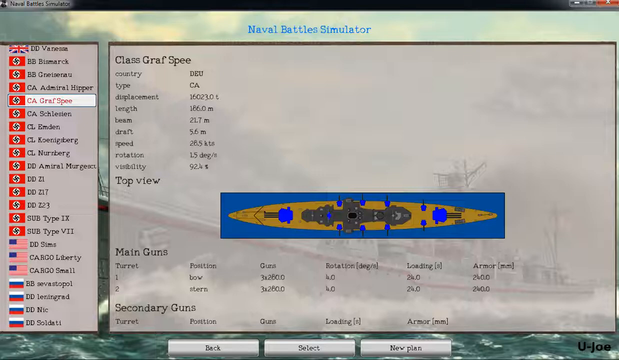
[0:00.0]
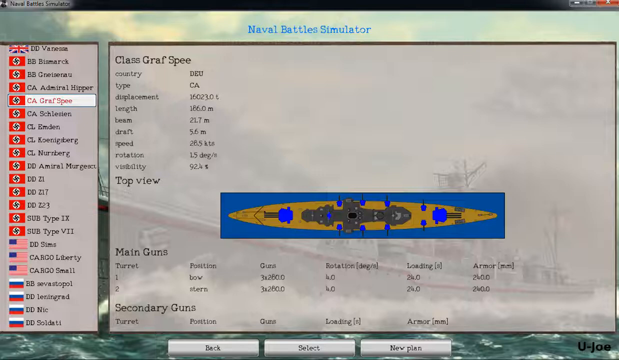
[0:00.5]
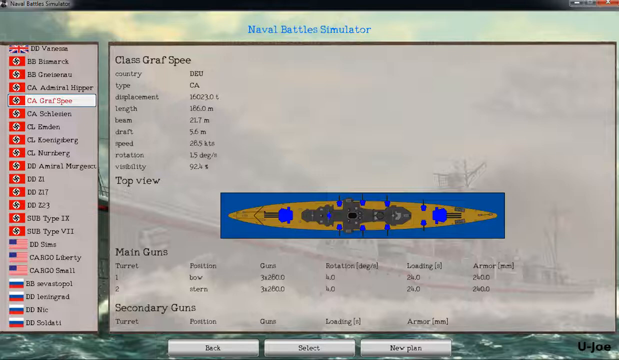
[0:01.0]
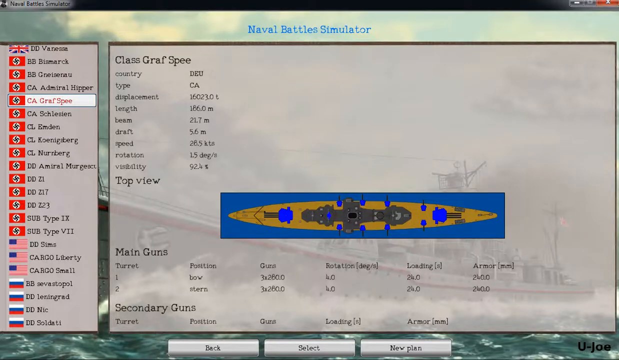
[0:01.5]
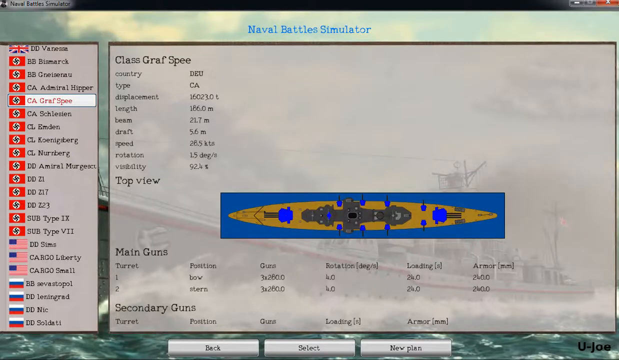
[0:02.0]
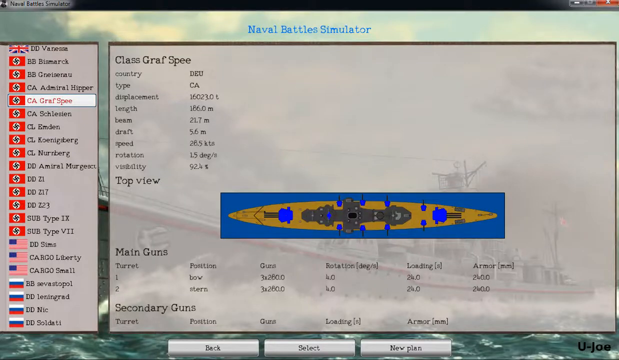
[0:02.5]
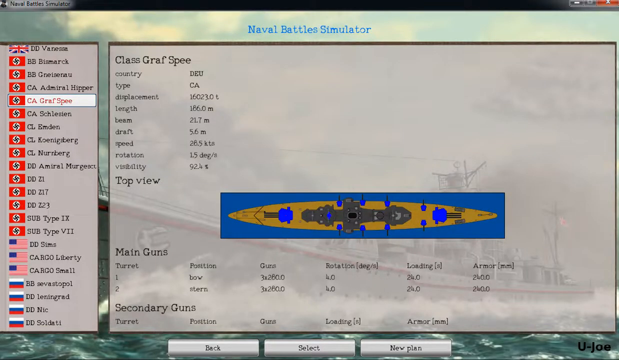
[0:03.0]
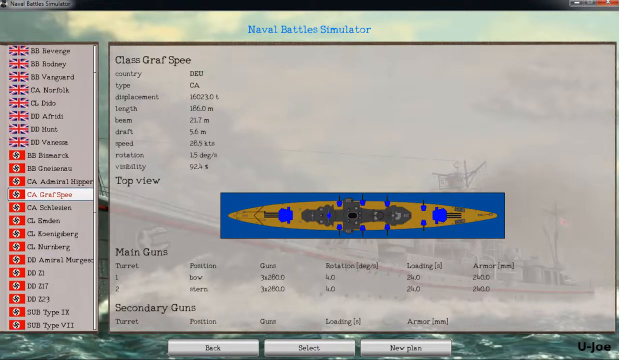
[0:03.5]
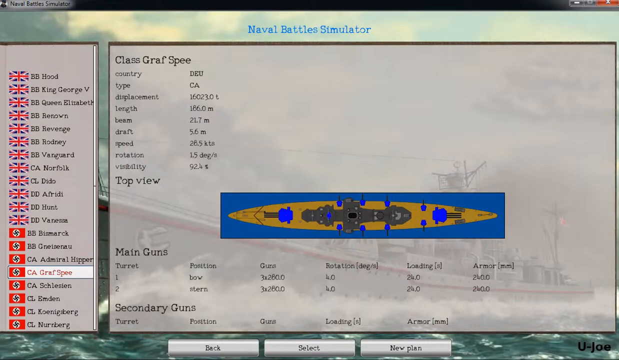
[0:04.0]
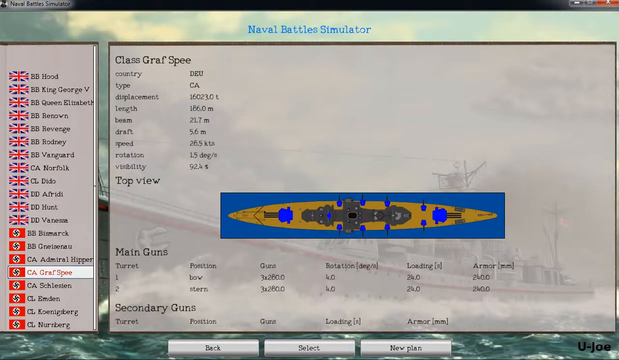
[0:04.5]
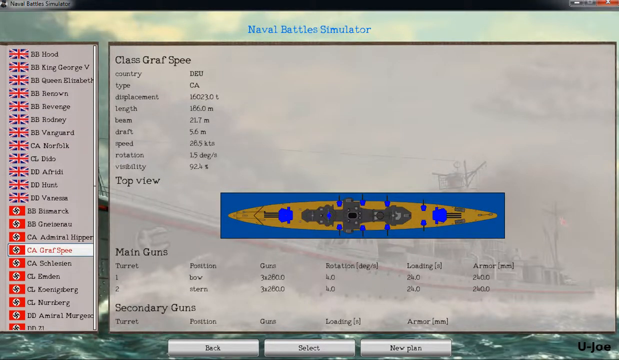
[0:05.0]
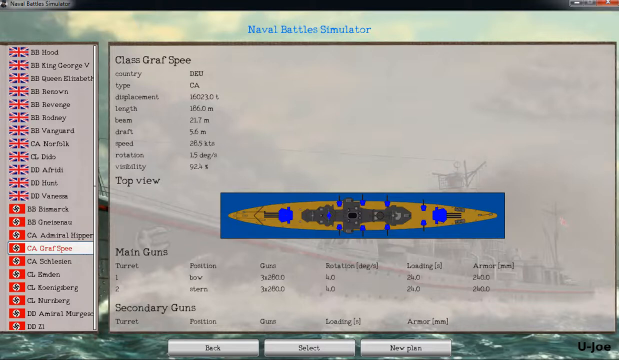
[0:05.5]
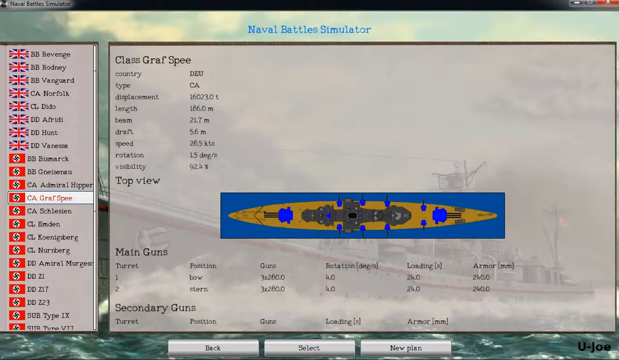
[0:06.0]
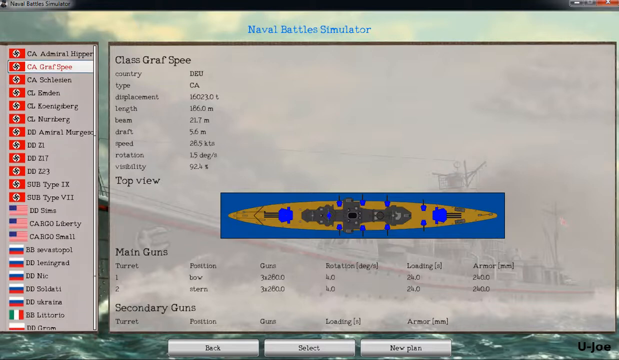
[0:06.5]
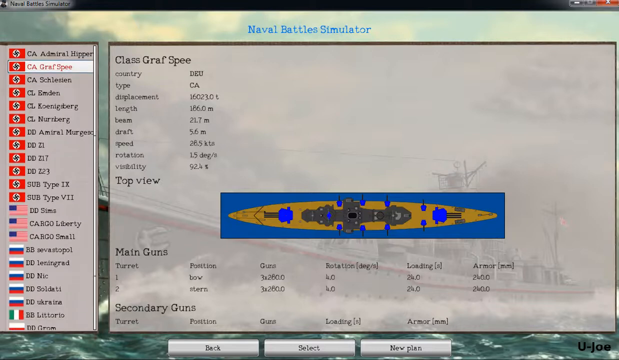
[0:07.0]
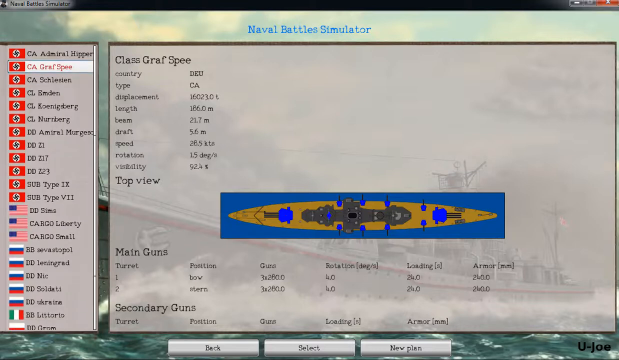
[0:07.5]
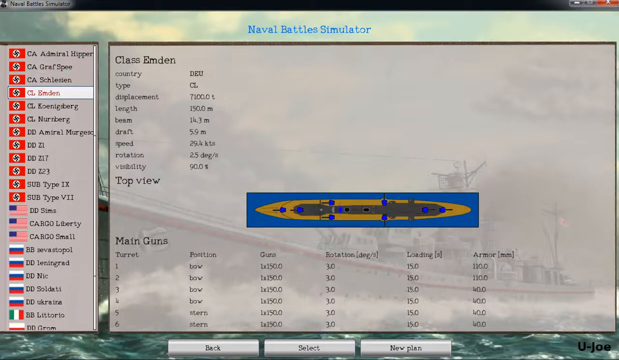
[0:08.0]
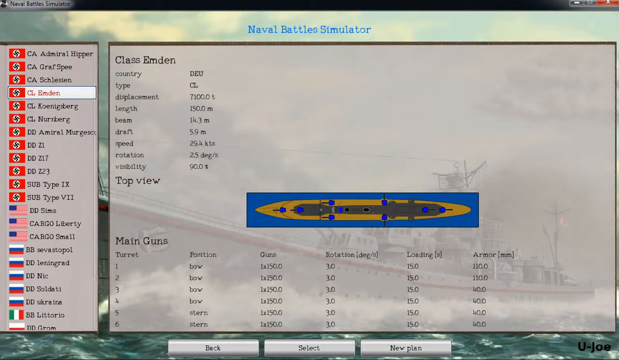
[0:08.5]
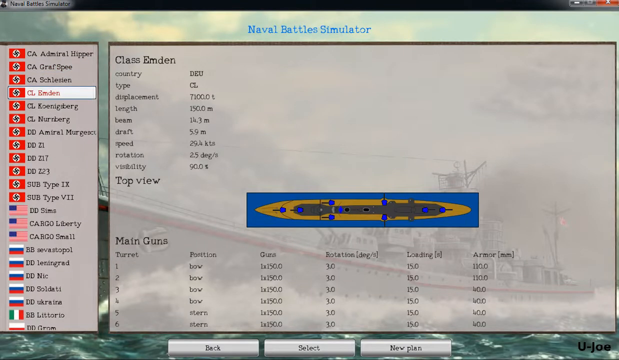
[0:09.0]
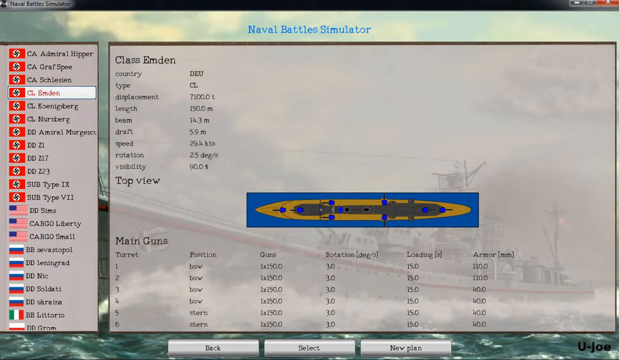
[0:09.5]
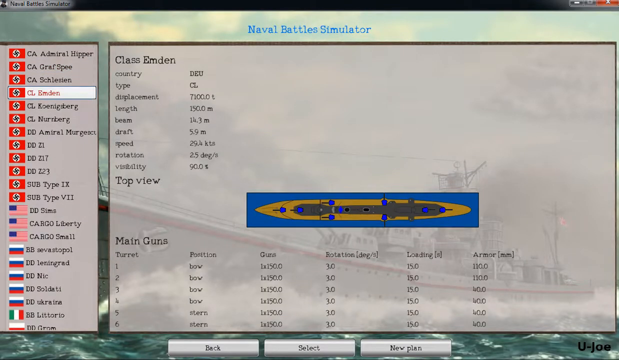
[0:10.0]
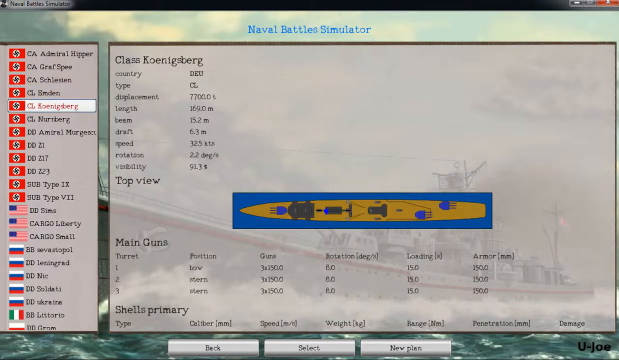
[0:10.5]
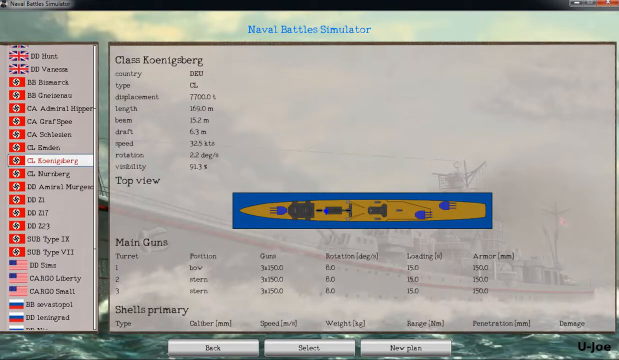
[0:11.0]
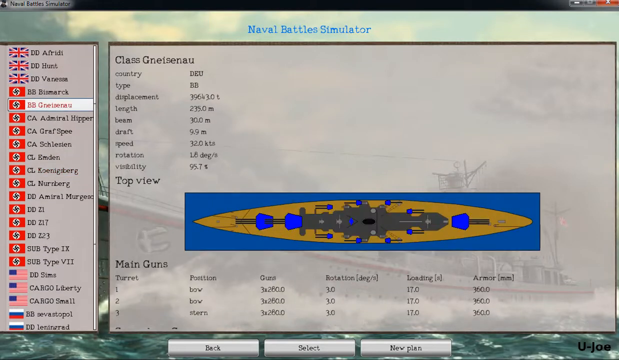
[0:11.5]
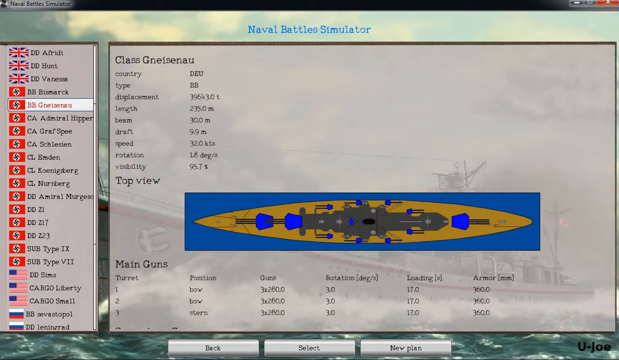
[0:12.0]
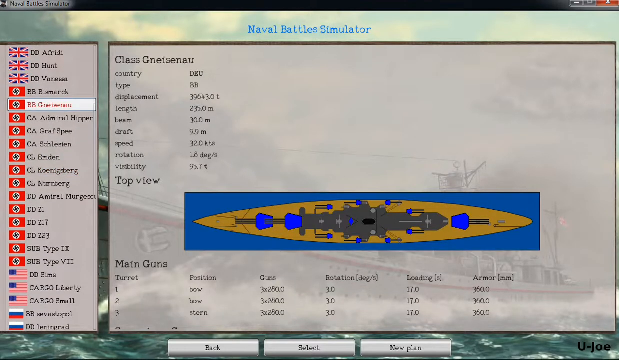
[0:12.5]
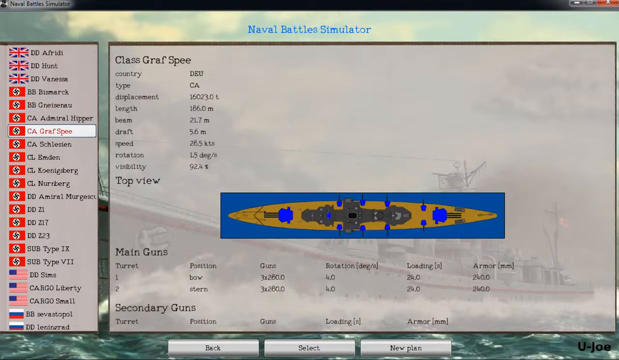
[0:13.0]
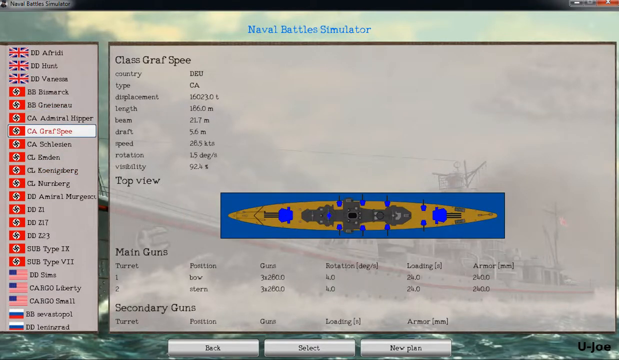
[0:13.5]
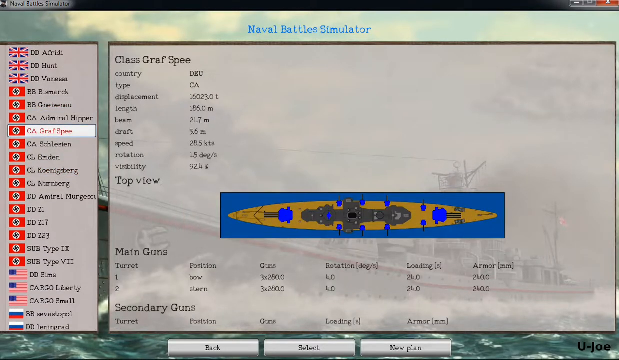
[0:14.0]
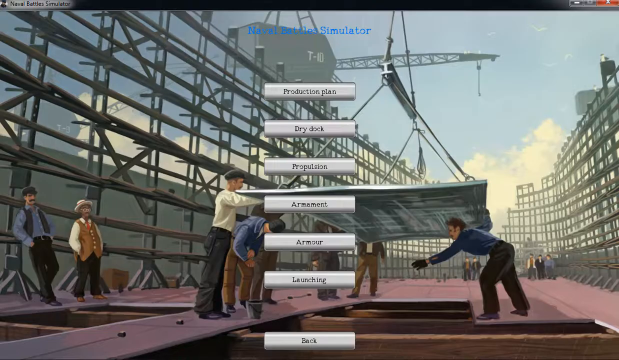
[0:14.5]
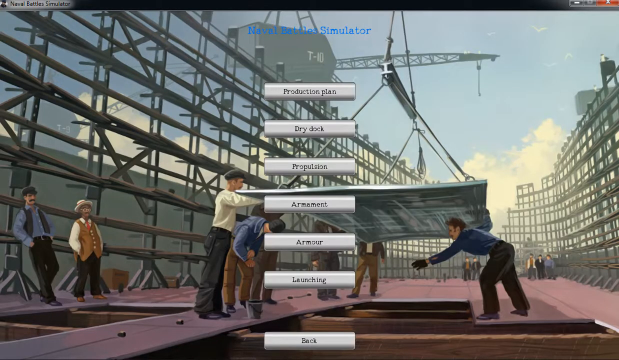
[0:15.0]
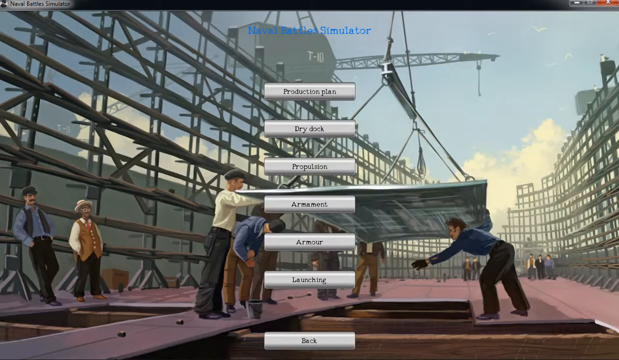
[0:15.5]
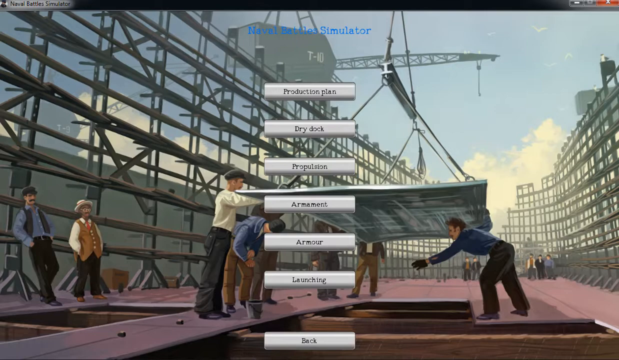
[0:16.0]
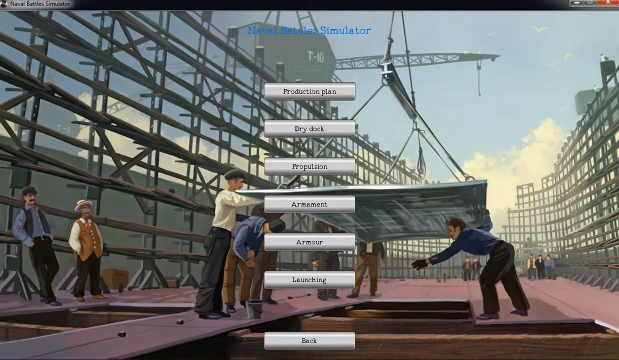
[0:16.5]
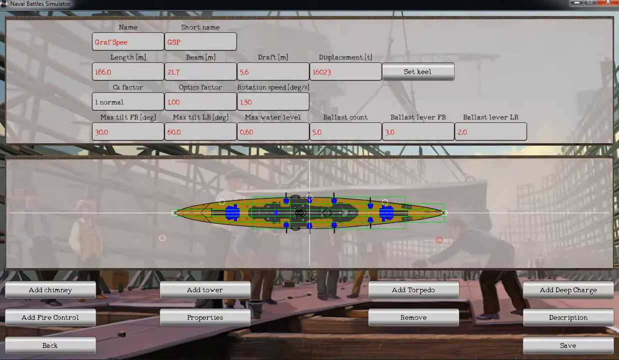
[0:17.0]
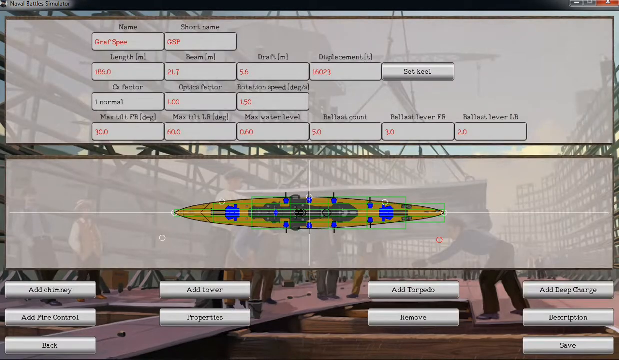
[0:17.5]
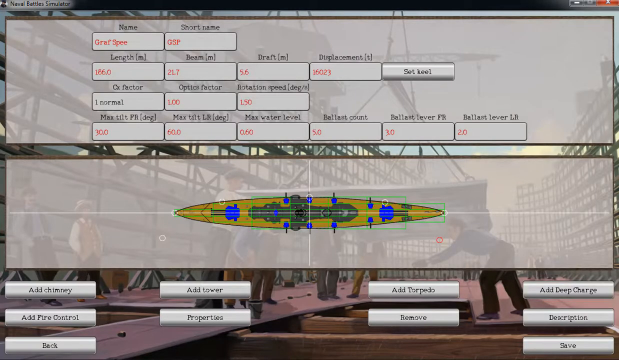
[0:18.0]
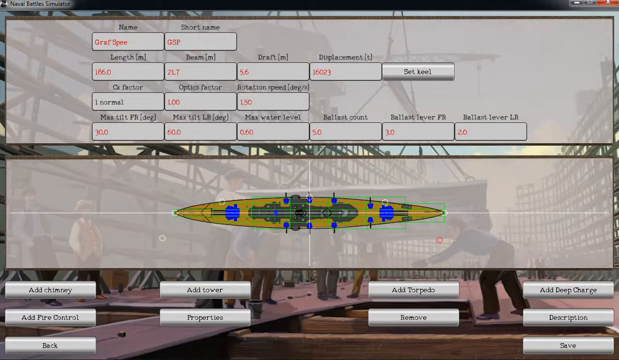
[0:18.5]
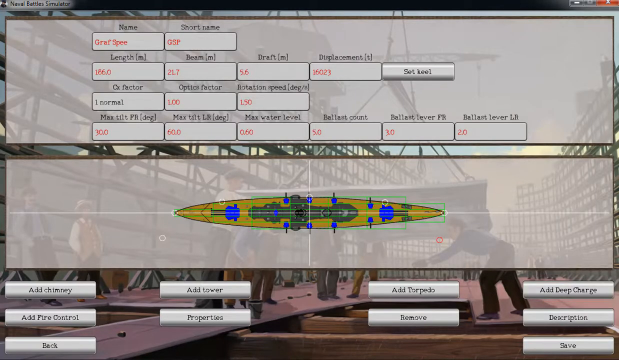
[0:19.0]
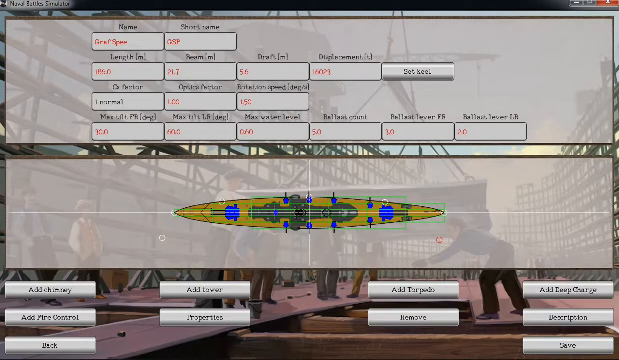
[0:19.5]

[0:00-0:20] A ship, something like a naval ship, is kind of at the bottom of the screen. It is brown against a blue background. Lots of black letters are written on the screen, and something blue at the top says "Naval Battle Simulator." Flags of different countries are off to the left: a red and black flag in the middle, the American flag, the European flag, and a flag with white, blue and red stripes. One flag looks like the Soviet flag. The scene then goes to people working on a boat outside, lifting things; they look like they are dressed from the 1920s. Six rectangular modules are in the middle, and "Naval Battle Simulator" appears in blue at the top. Probably seven men are working on a huge metal concrete piece; a man is under it and people are holding it.